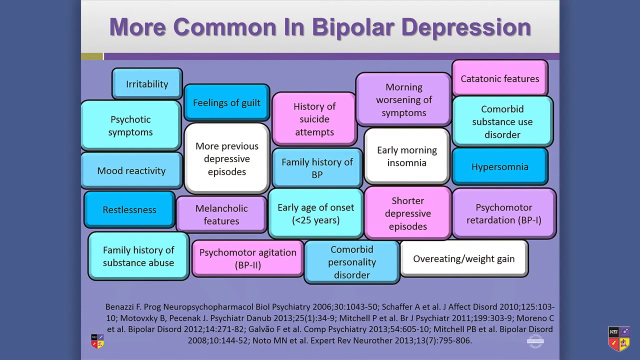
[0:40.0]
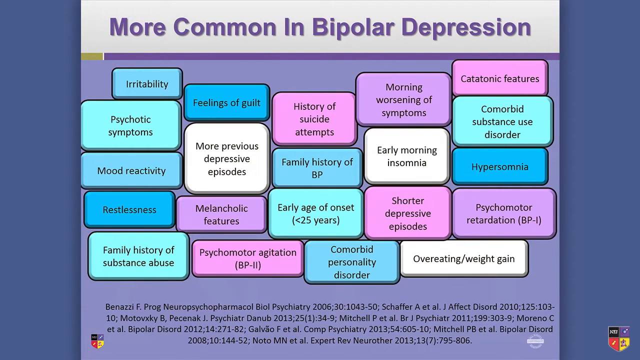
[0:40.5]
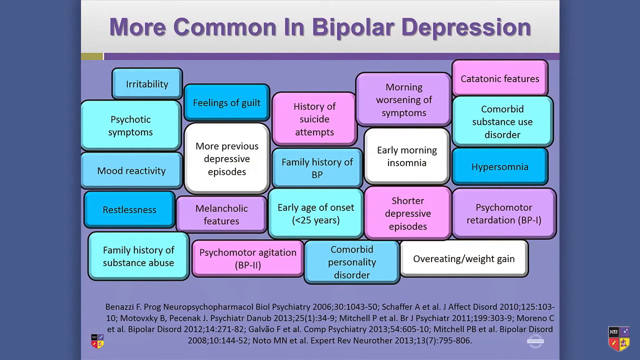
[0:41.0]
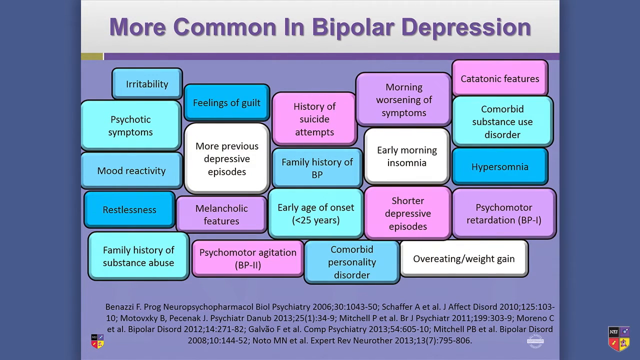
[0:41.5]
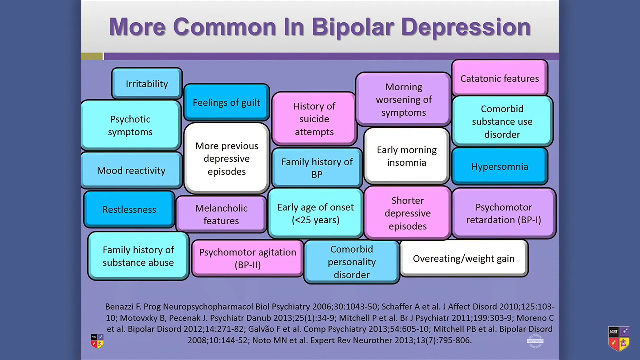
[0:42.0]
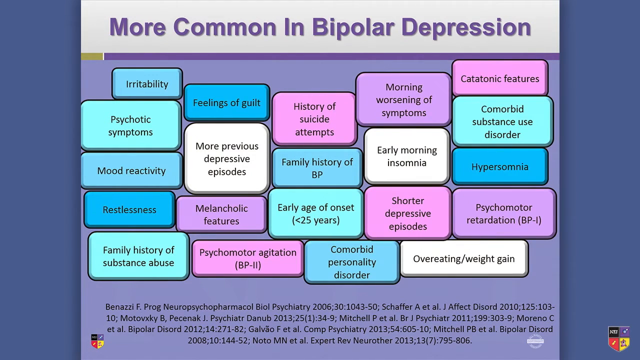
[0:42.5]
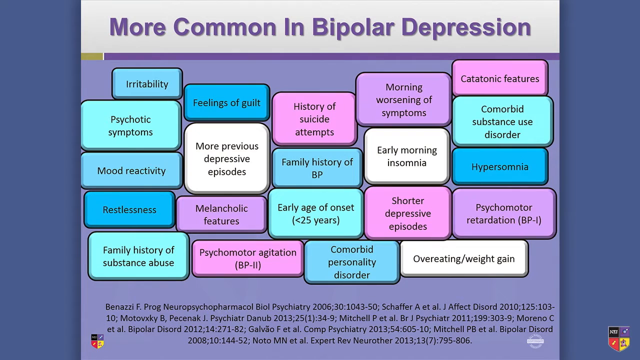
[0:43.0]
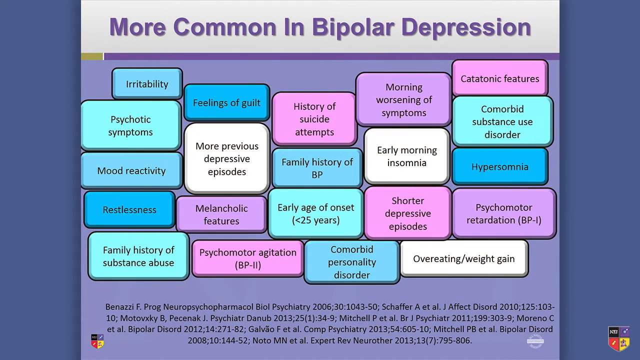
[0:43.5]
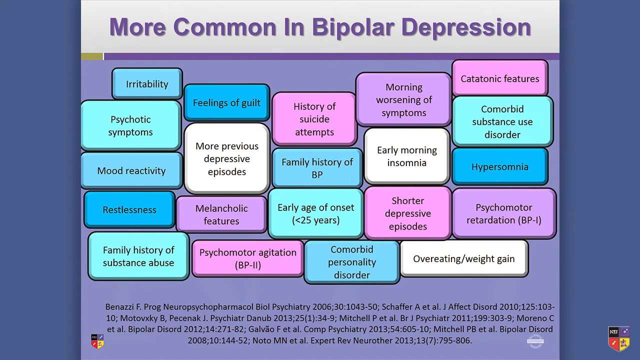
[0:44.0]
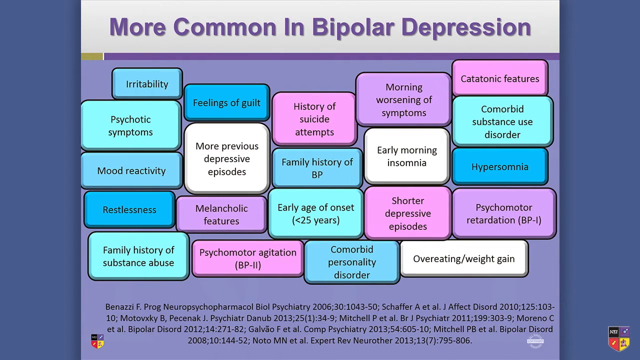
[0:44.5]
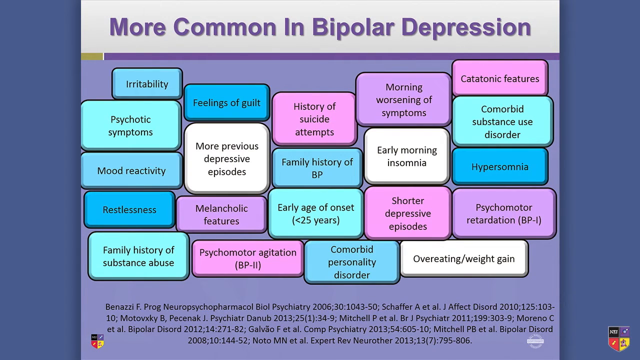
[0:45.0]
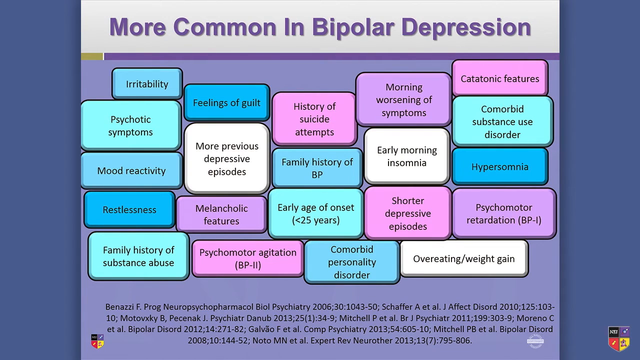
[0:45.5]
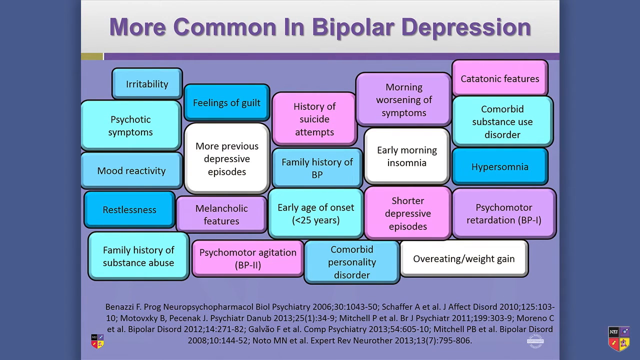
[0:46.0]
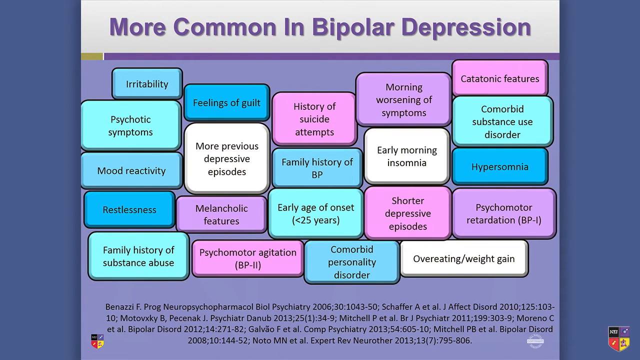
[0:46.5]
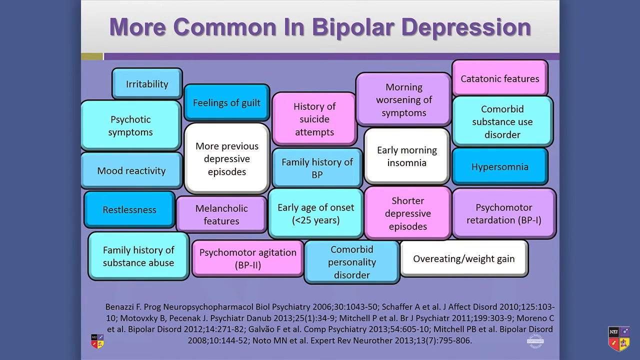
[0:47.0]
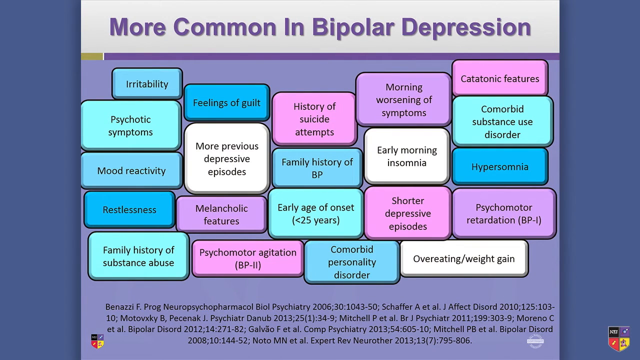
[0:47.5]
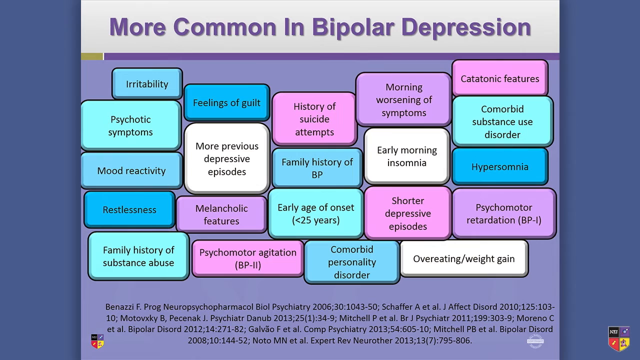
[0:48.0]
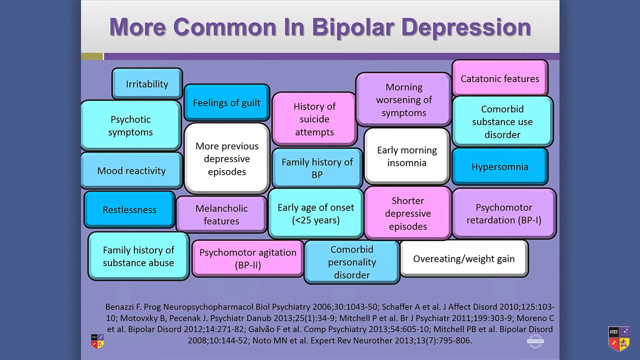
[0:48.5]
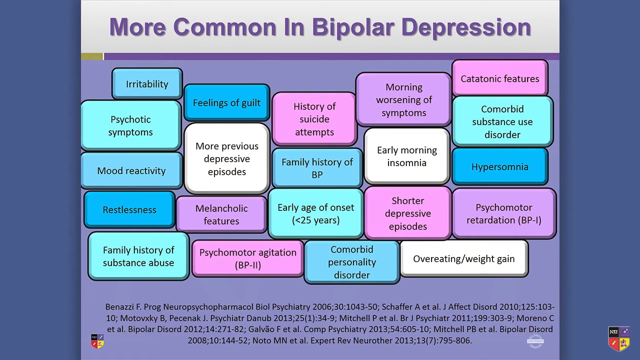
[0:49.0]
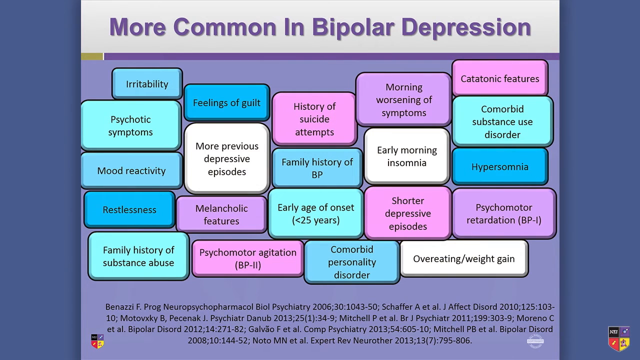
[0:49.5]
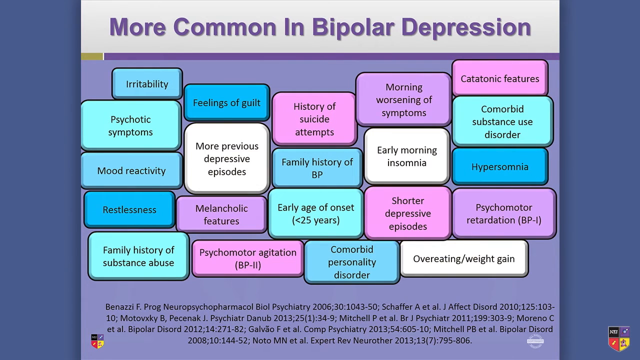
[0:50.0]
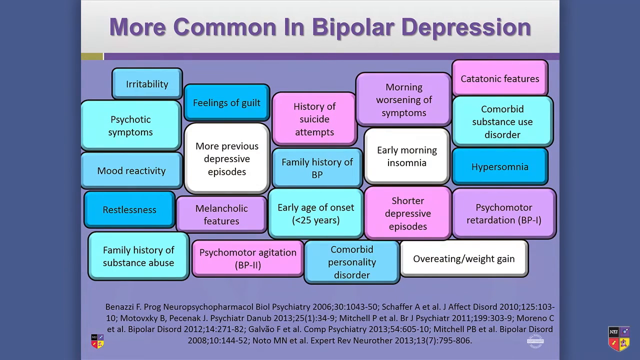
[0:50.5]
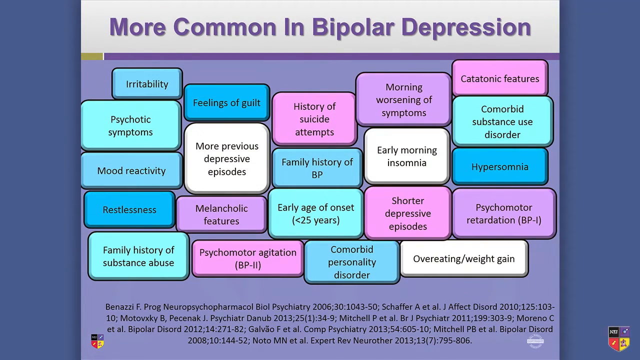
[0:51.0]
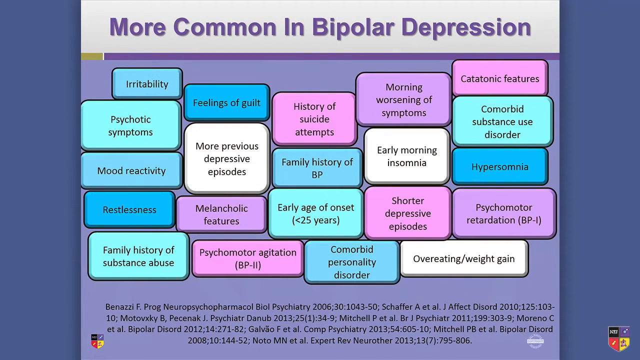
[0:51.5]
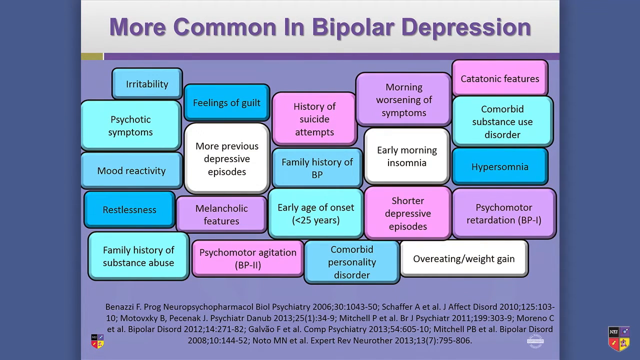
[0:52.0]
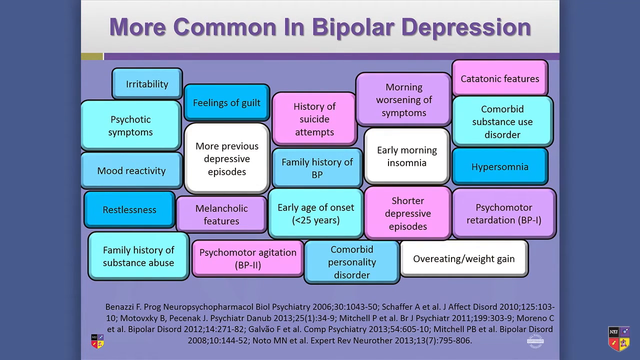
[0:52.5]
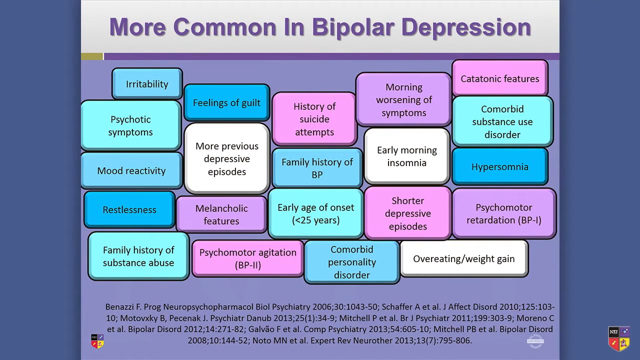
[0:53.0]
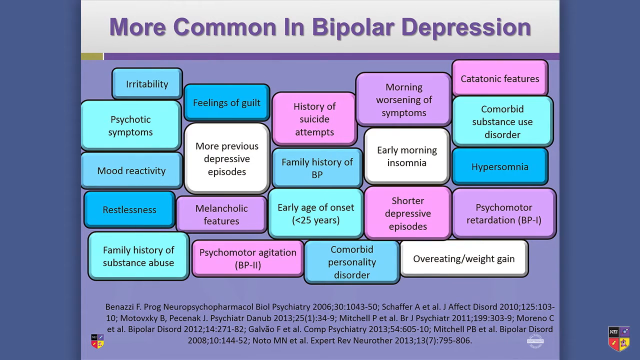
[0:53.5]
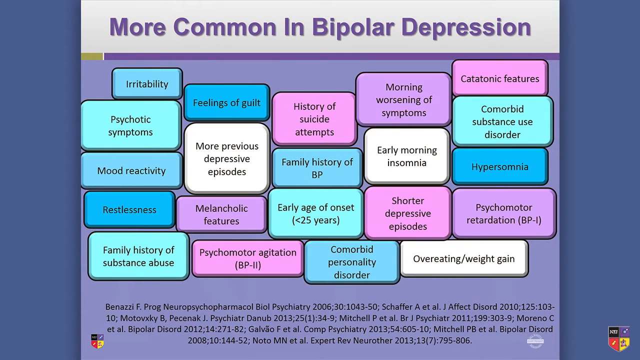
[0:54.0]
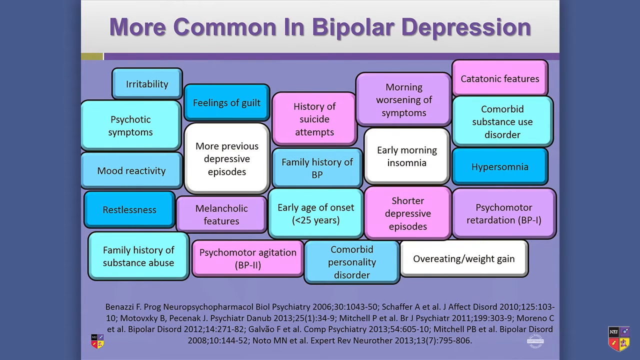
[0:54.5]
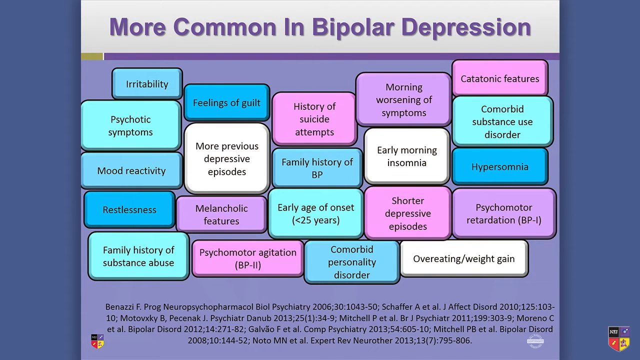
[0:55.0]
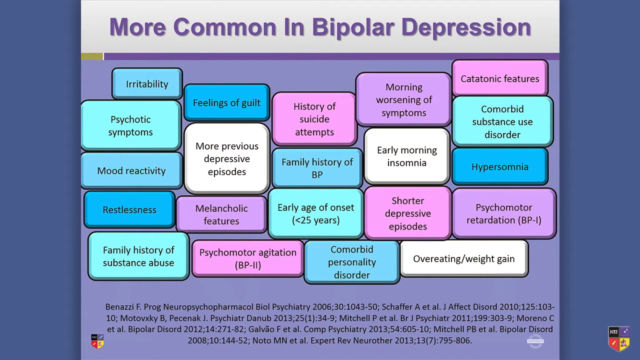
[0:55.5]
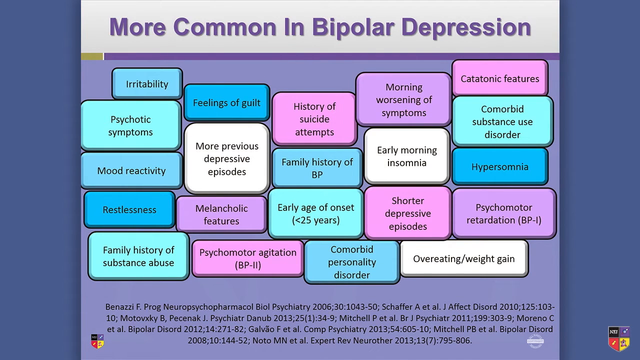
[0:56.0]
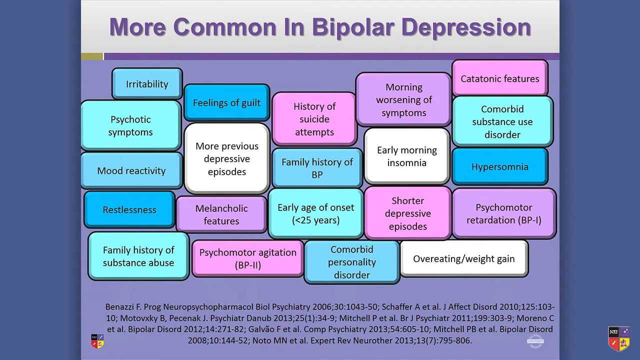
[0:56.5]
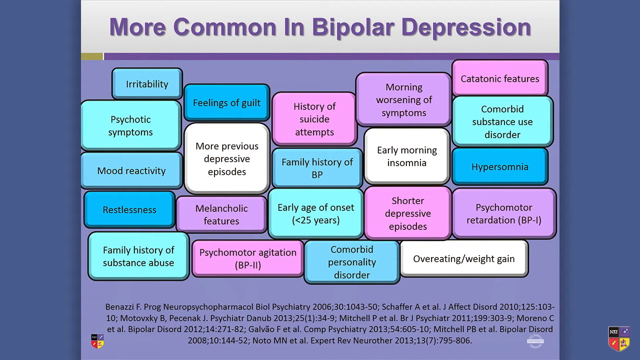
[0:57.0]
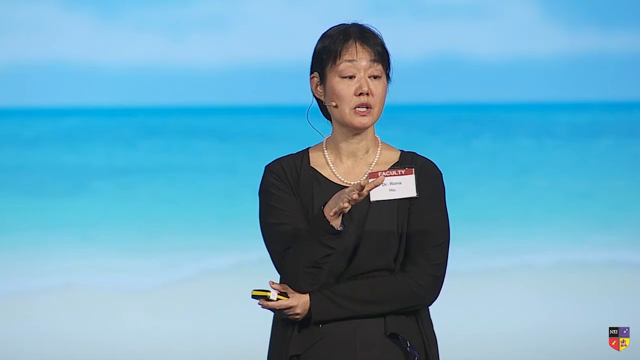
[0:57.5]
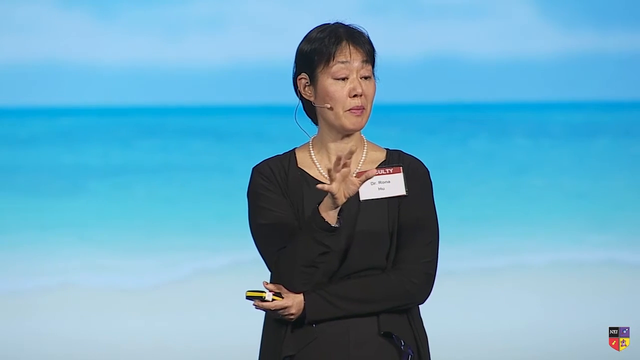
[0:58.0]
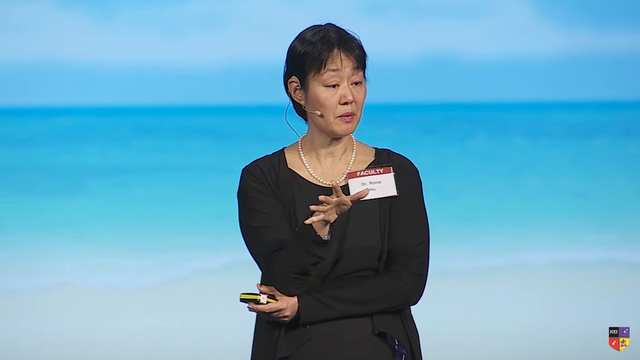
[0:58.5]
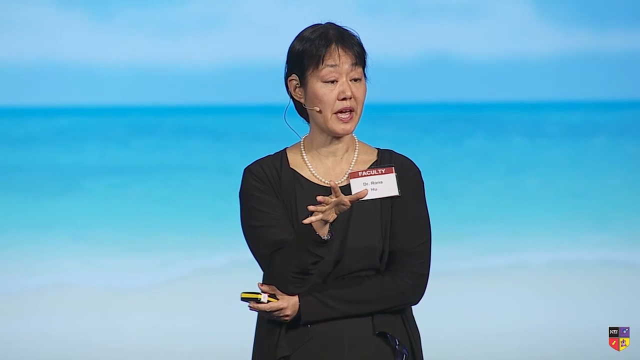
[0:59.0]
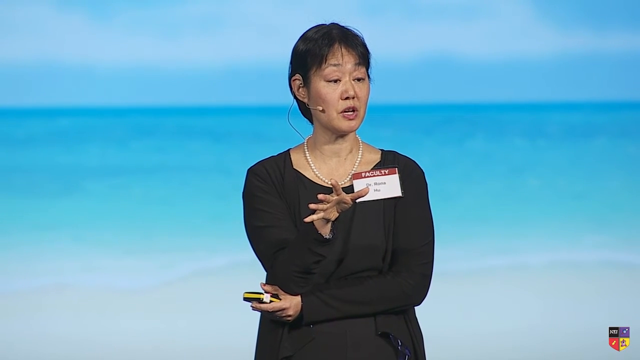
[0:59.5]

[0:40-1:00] A slide has the heading "more common in bipolar depression." Items on the list include irritability, feeling of guilt, more previous depressive episodes, restlessness, overeating, weight gain, early morning insomnia, family history of bipolar, history of suicide attempts, family history of substance abuse, mood, and several others, each kind of in a box of a different color. The video then cuts to an Asian woman who is speaking. Her hair is possibly pulled back, though the back of her hair is not visible. She wears white pearls and a name tag, and she is dressed all in black, in what looks like an all-black dress or something similar. Her microphone is visible: one of those mics that comes around so she can speak without holding it.